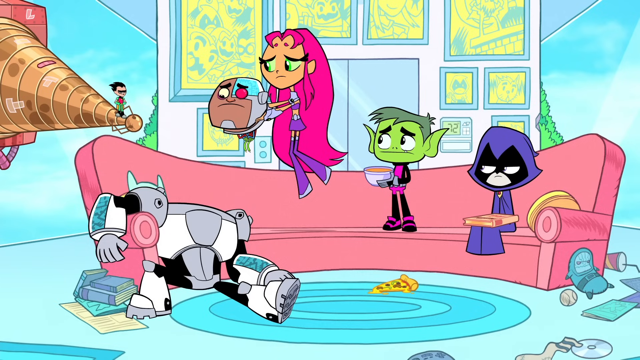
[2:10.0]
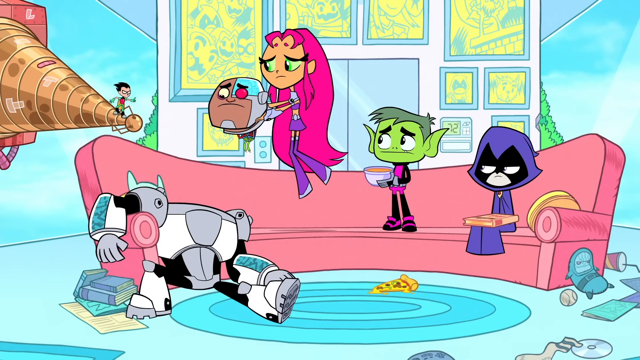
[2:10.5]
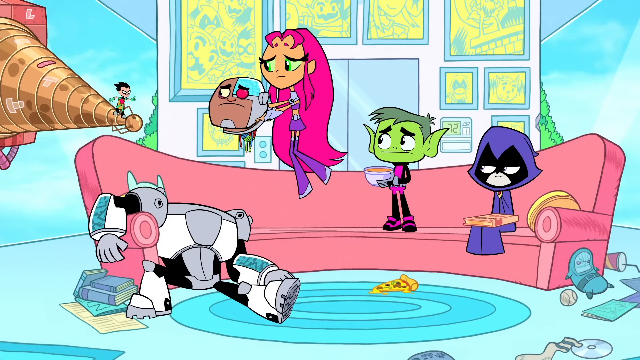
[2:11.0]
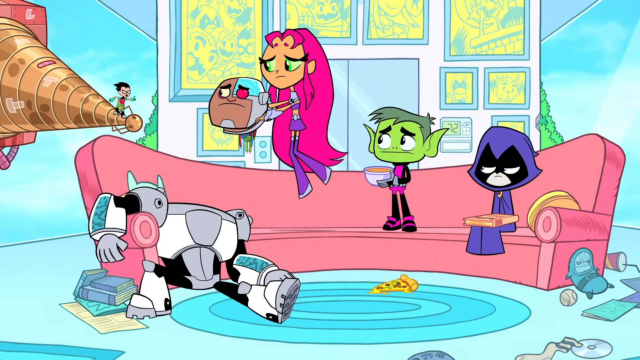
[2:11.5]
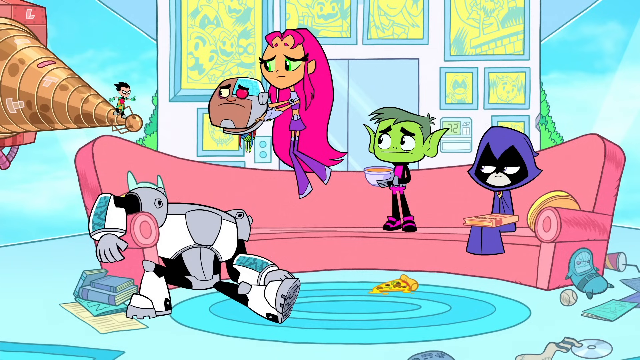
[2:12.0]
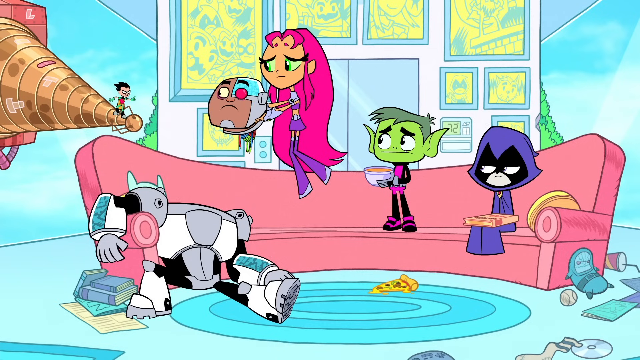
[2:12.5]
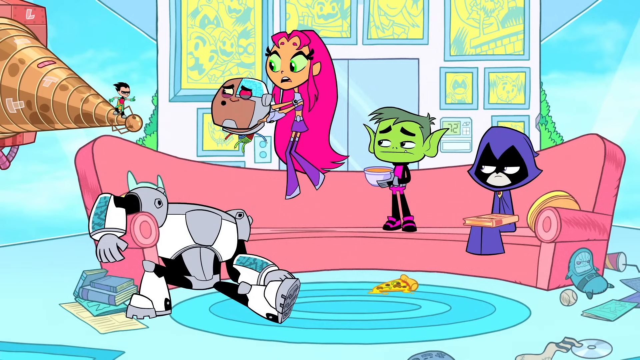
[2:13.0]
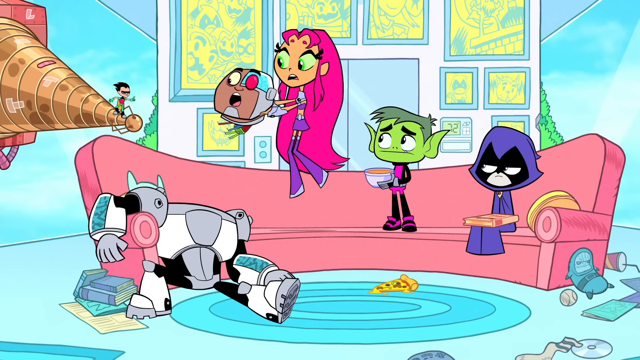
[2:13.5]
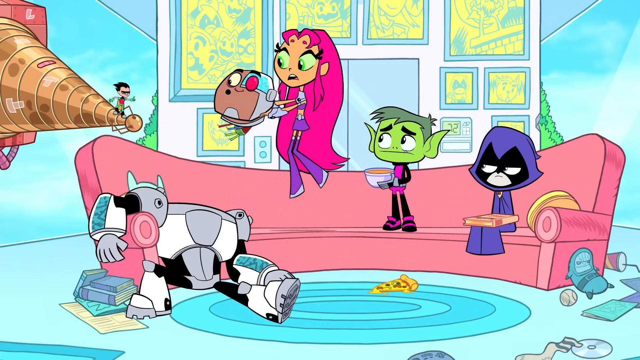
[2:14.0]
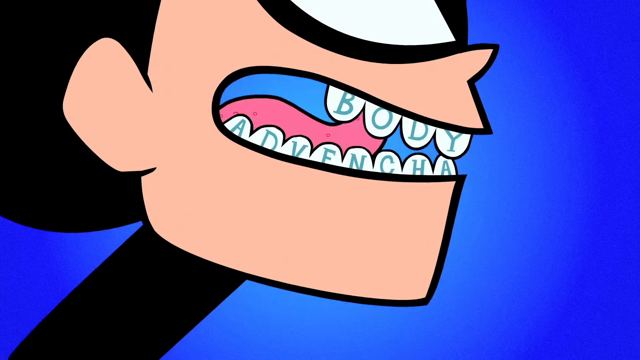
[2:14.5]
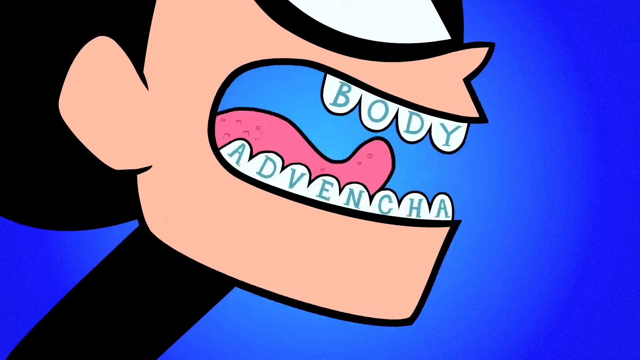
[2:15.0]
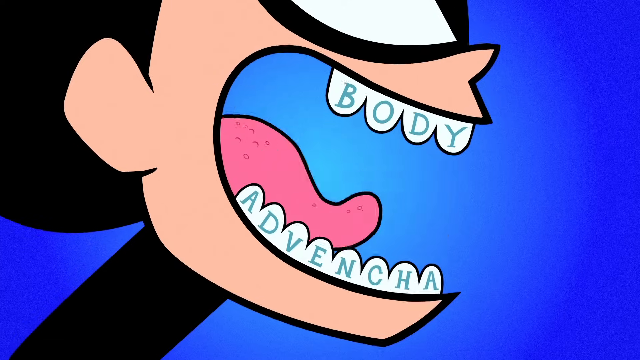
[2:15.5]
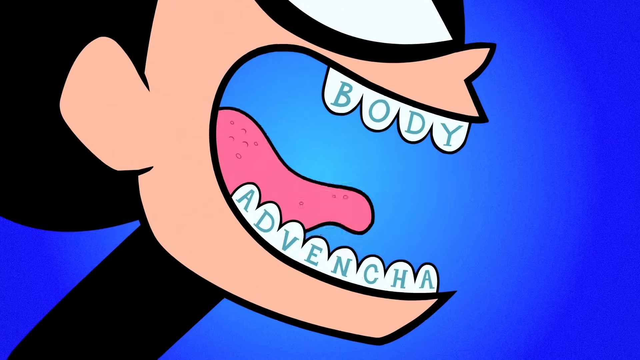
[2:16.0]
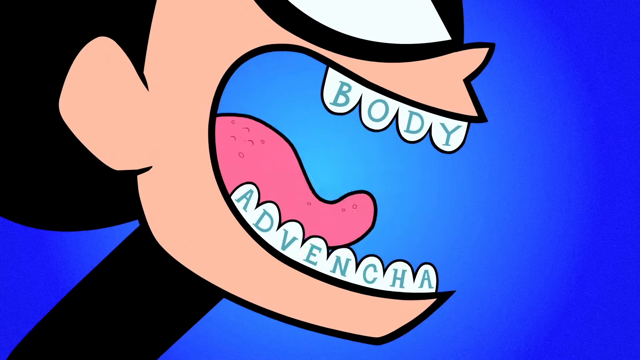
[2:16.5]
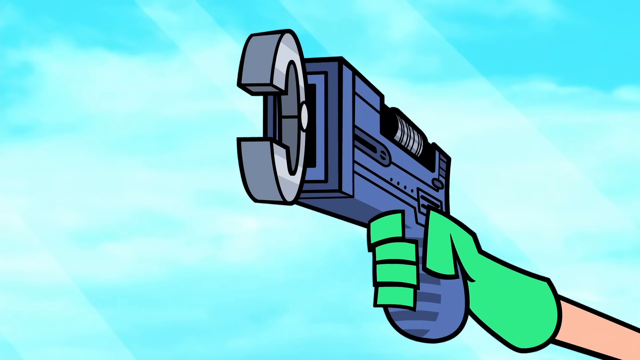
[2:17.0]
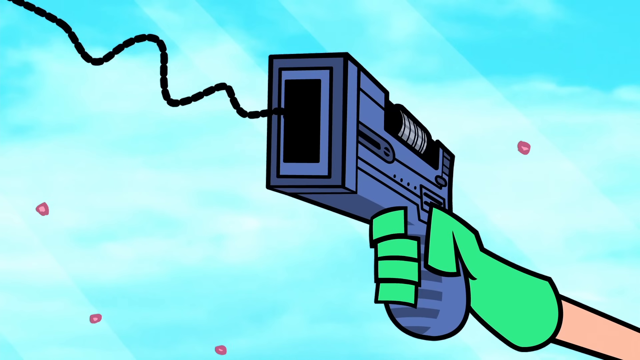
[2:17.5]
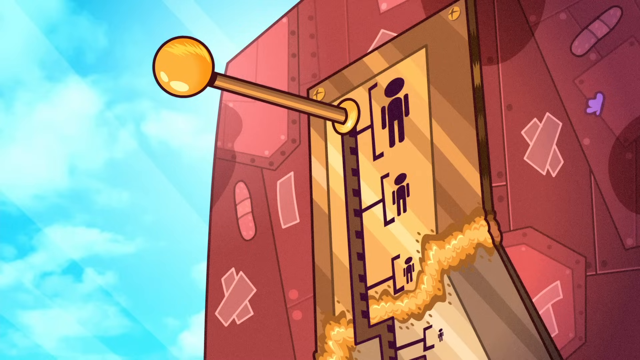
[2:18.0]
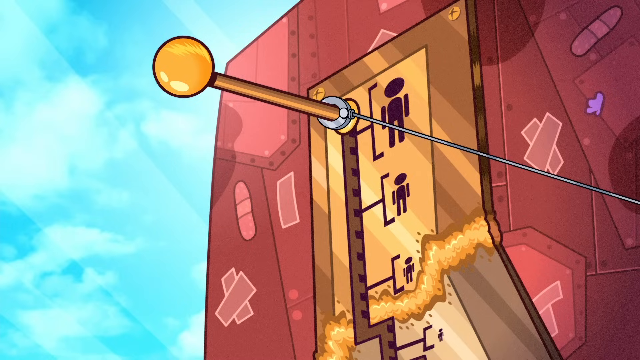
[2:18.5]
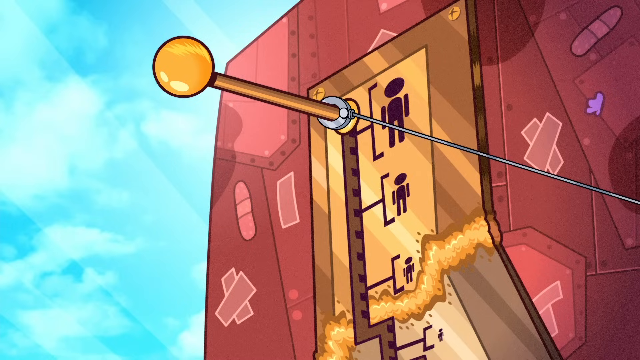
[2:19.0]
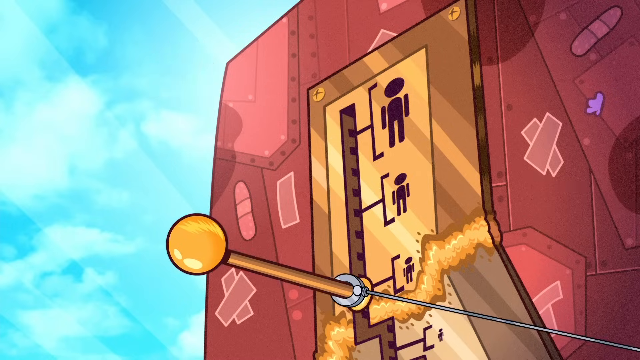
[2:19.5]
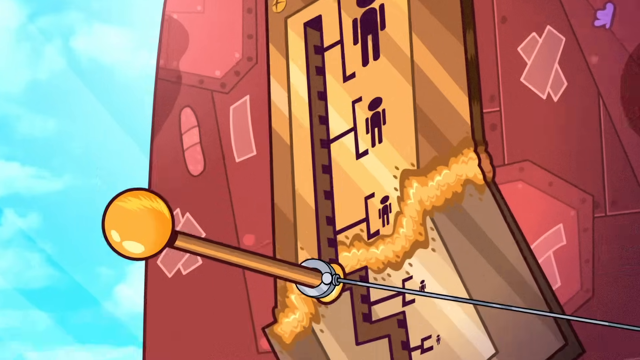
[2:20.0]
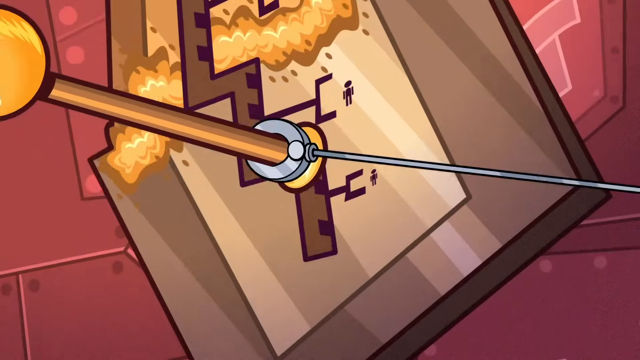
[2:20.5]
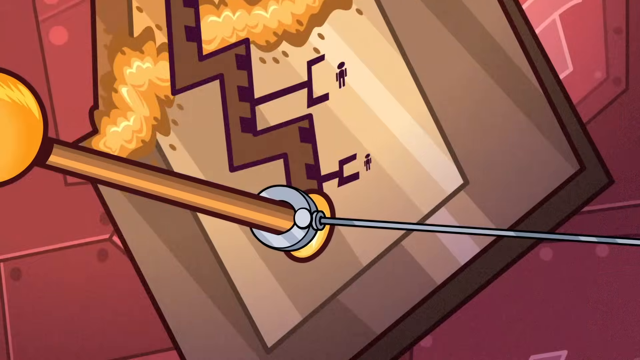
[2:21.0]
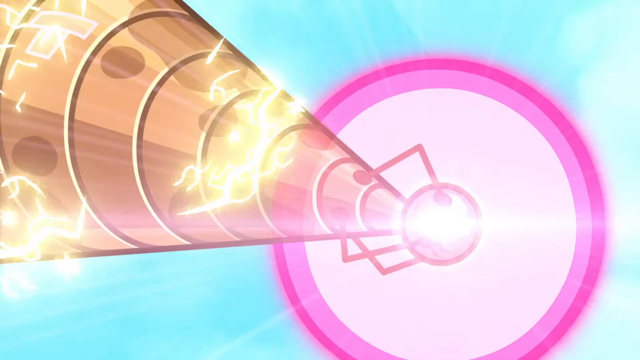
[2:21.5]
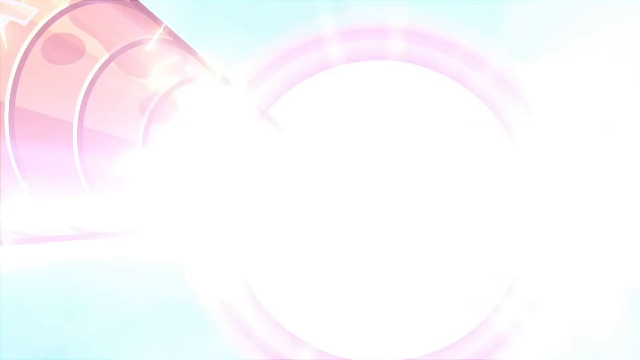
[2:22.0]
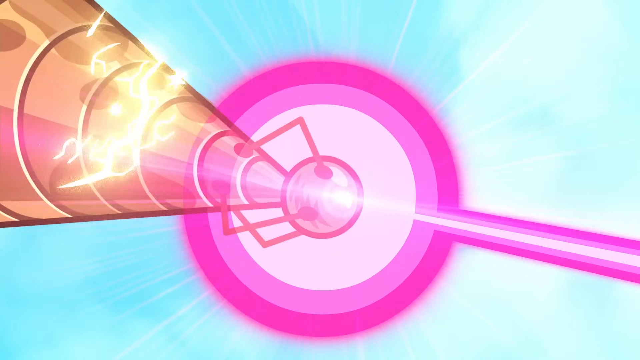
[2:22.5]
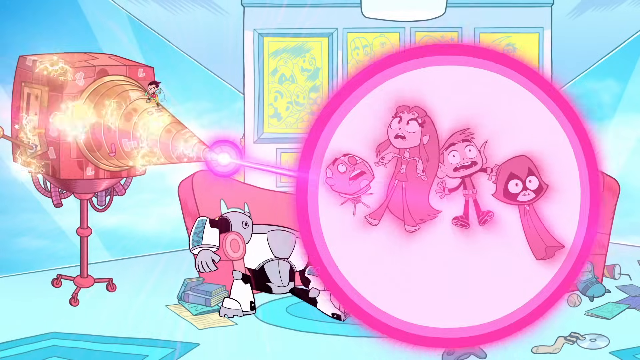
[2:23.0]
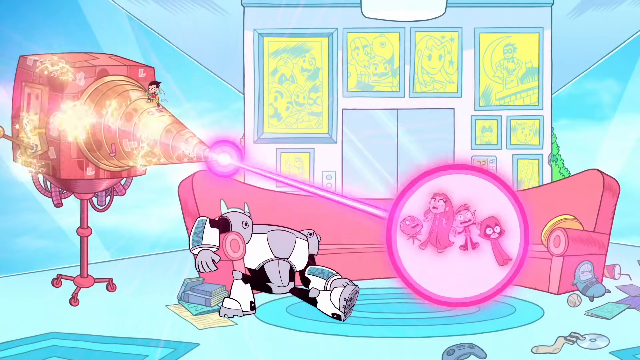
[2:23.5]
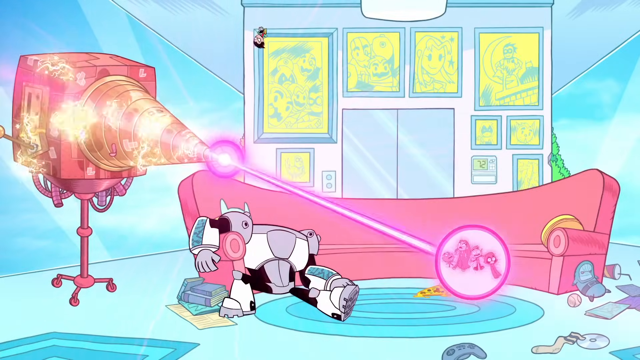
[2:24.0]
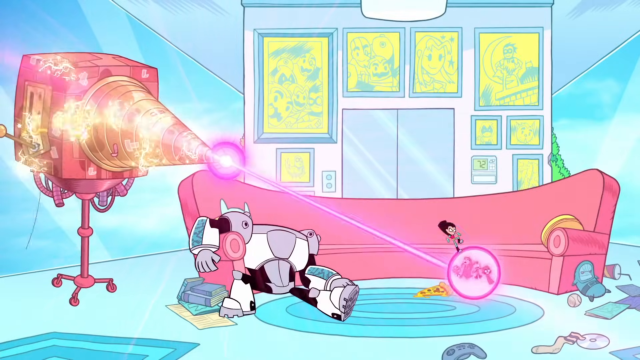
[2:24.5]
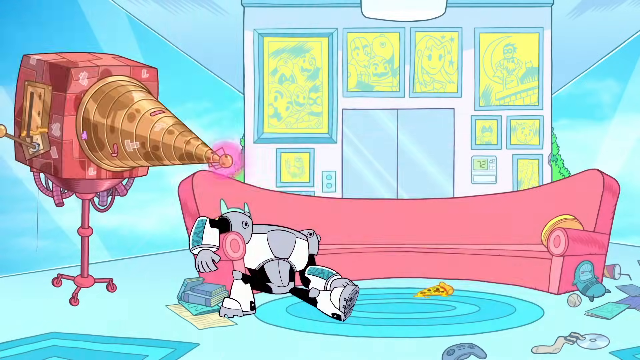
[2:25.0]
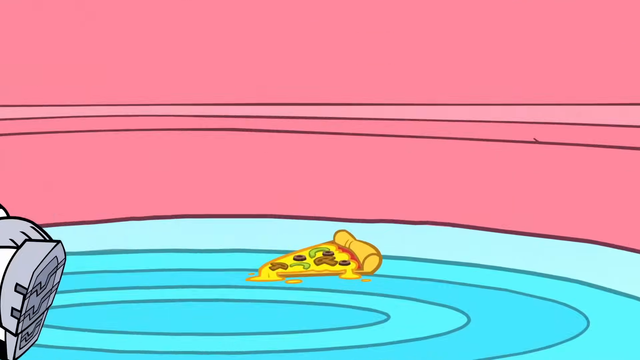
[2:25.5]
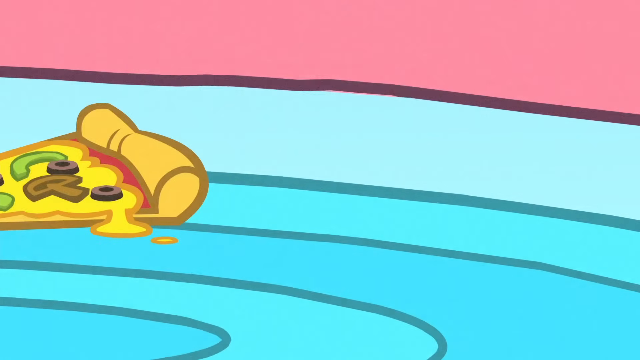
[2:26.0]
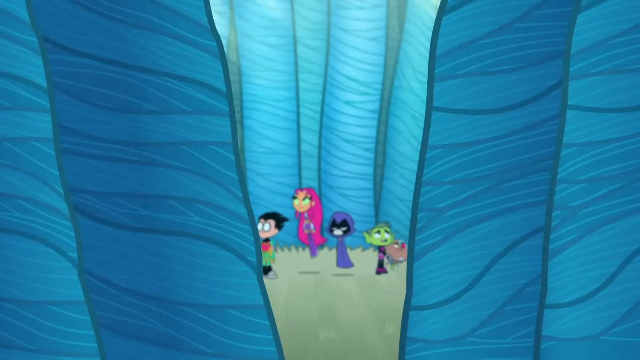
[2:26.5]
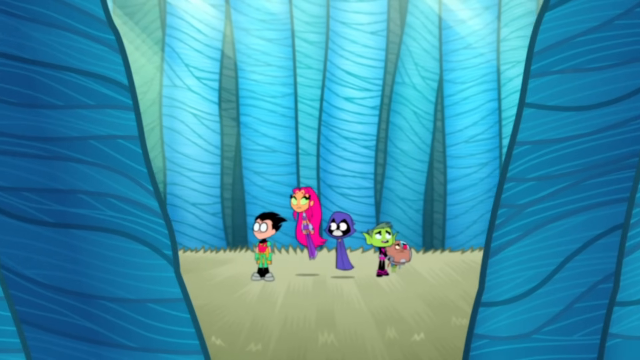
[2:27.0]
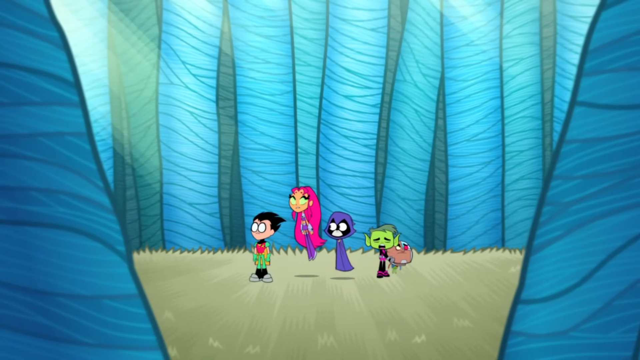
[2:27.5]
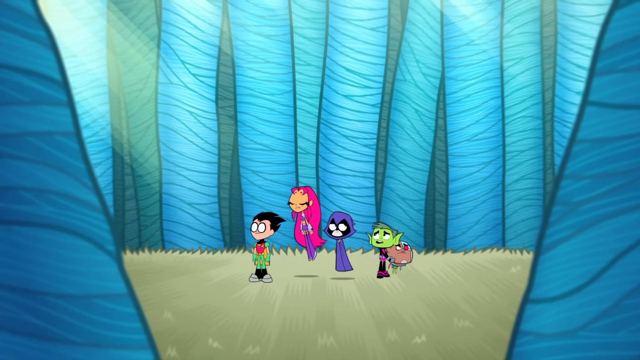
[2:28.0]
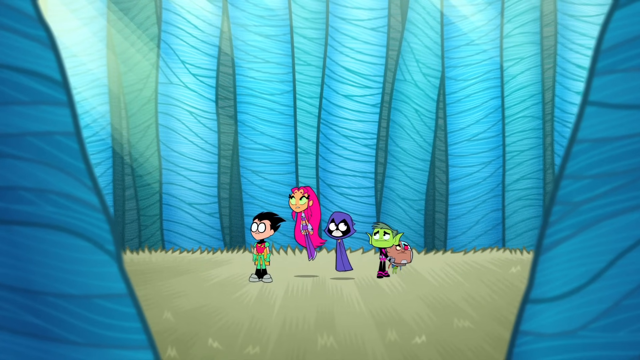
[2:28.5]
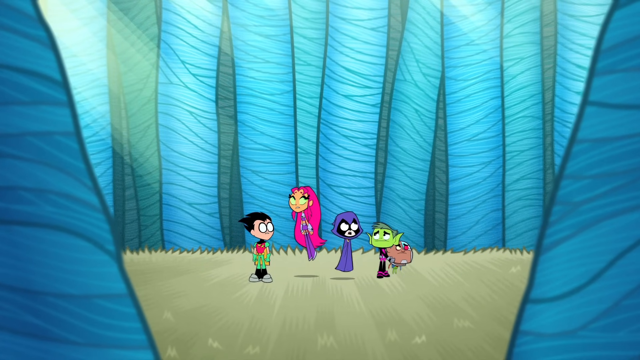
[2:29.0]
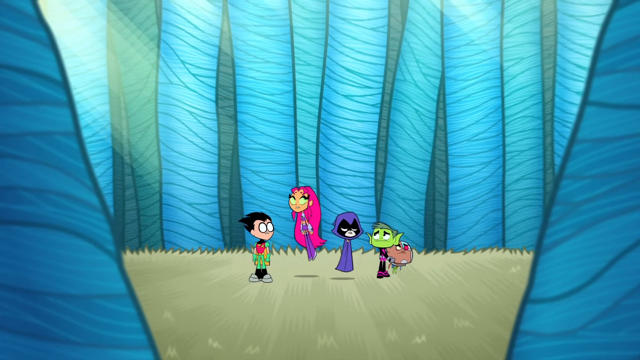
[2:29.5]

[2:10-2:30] Most of the Teen Titans are on the couch, with Robin on the left side of the screen standing on top of the pointed end of the machine. Raven is sitting on the couch, Beast Boy is standing on the couch, and Starfire is floating just above it, holding onto Cyborg's head, which has been propelled from his body. Cyborg's body is kind of crumpled on the ground, kind of propped against the lower left side of the couch. A piece of pizza is lying on the floor. On the right are some random toys: what looks to be a doll propped up against the couch, with a ball like a baseball next to it. Cyborg's head seems to have wires hanging out that almost simulate arms and legs. In a close-up of Robin, "Body Advencha" is written across his teeth, and he moves his tongue around. He then uses his grappling hook to turn the machine on, shrinking the Teen Titans all to microscopic size. They are in the carpet, which is much taller than them.